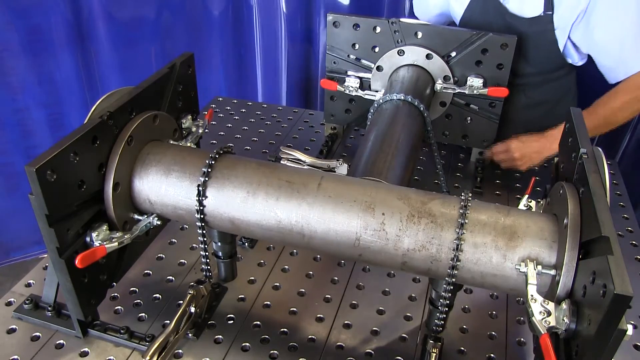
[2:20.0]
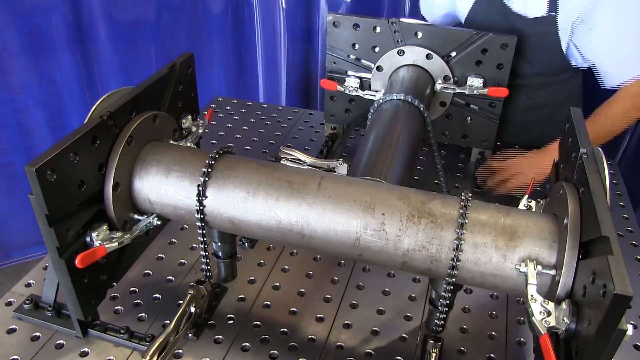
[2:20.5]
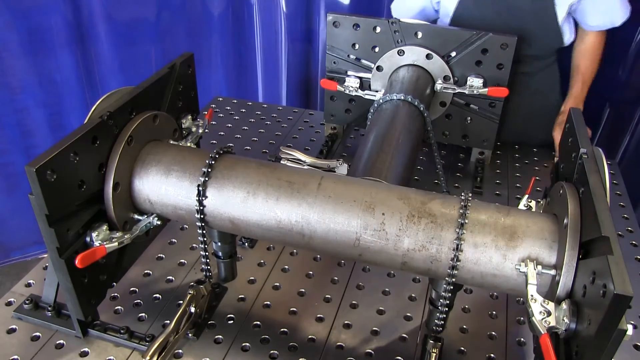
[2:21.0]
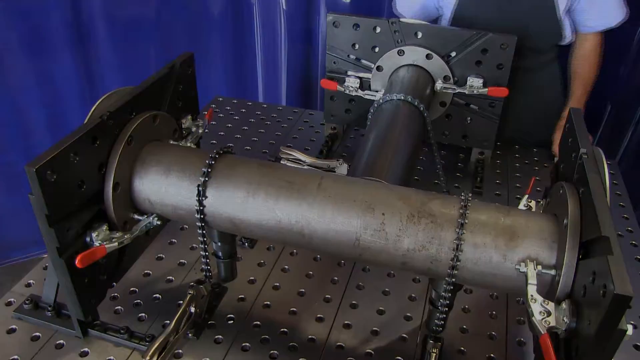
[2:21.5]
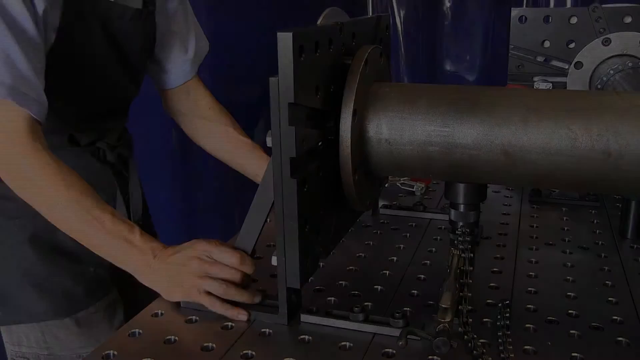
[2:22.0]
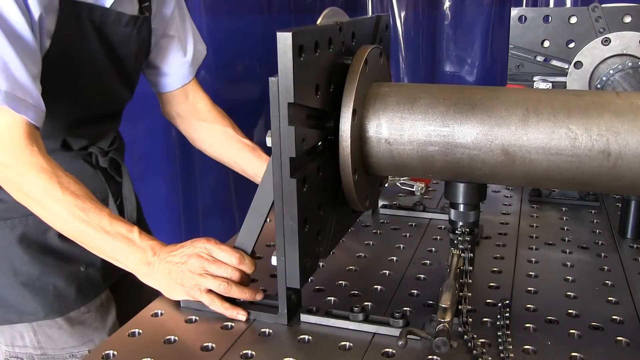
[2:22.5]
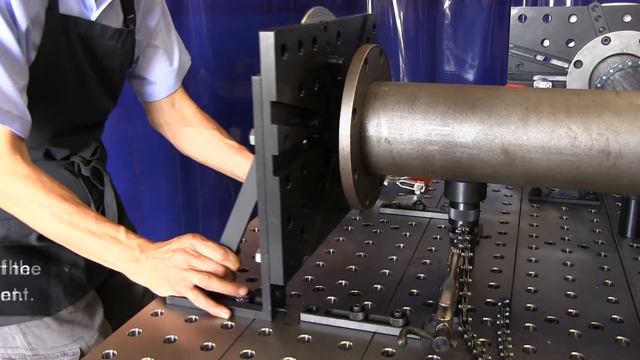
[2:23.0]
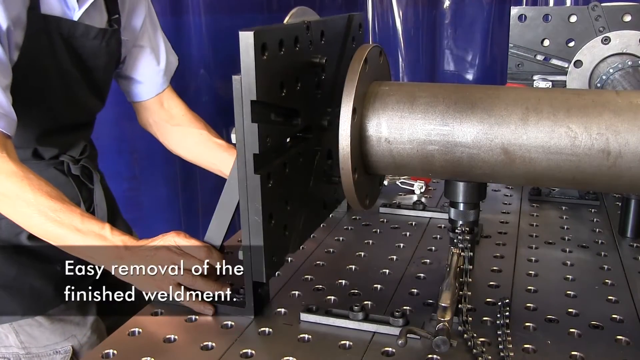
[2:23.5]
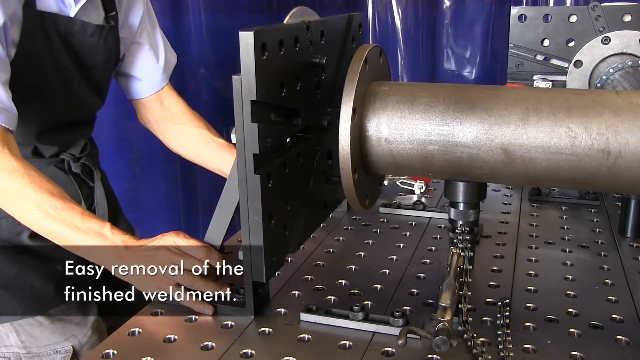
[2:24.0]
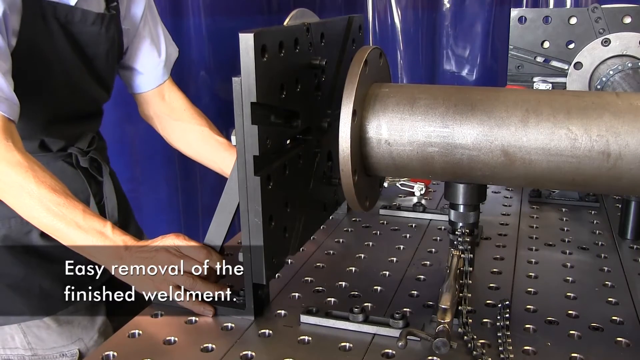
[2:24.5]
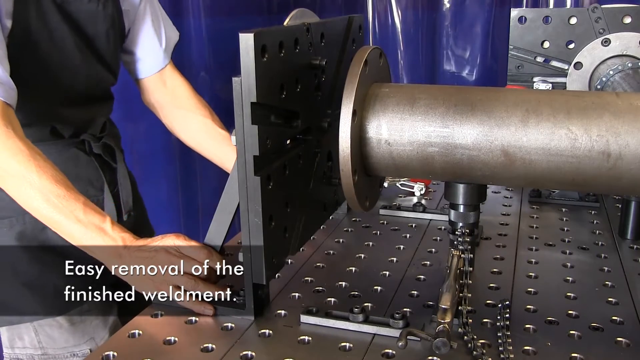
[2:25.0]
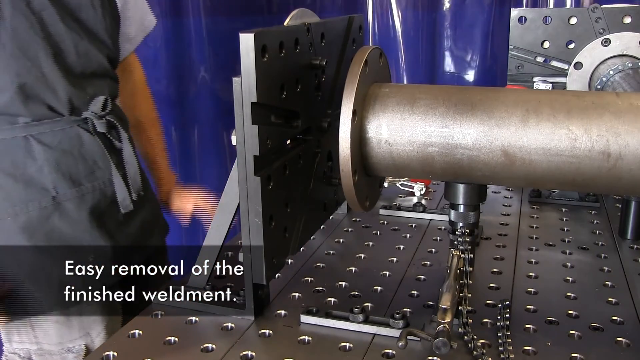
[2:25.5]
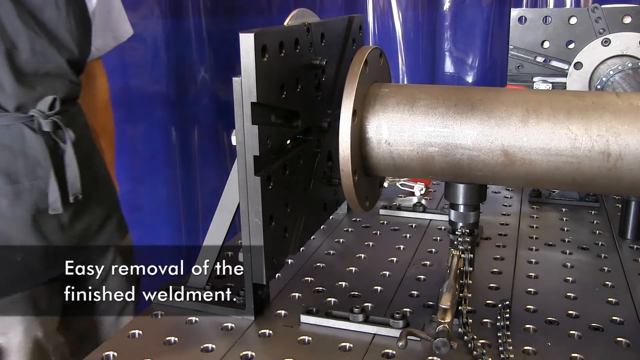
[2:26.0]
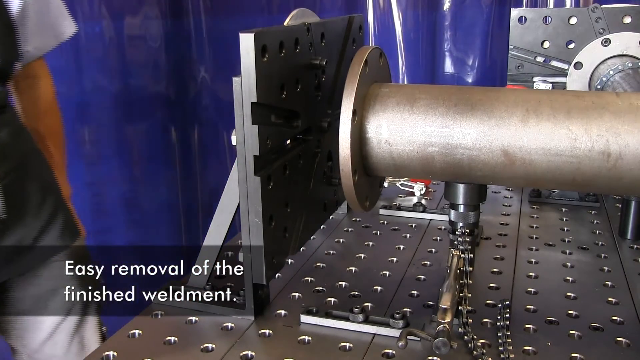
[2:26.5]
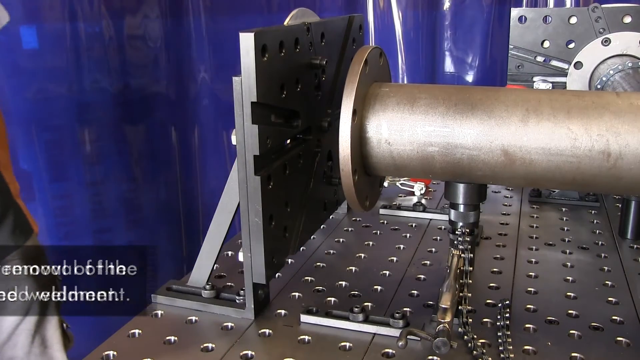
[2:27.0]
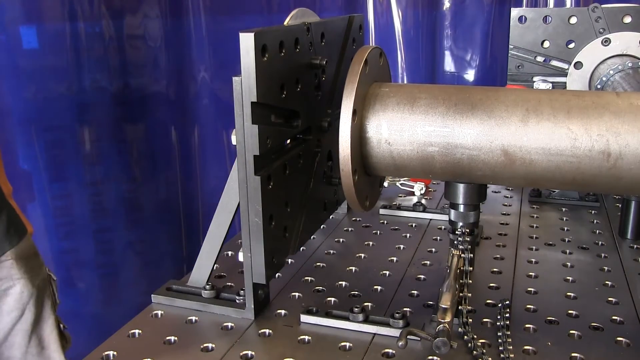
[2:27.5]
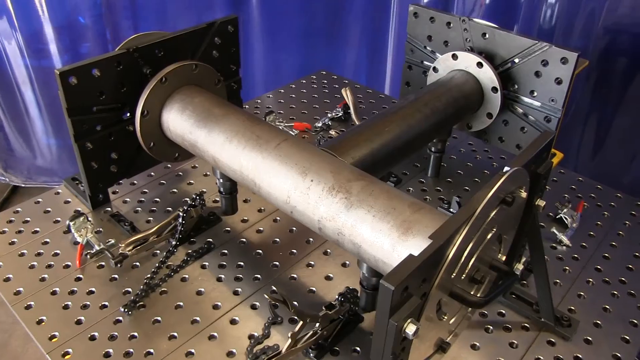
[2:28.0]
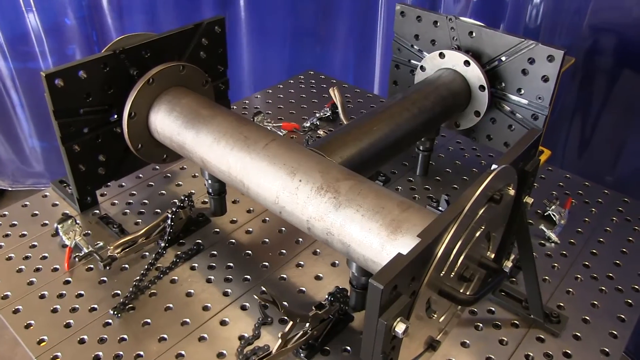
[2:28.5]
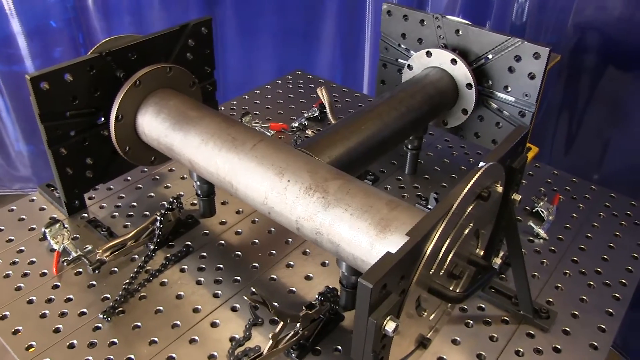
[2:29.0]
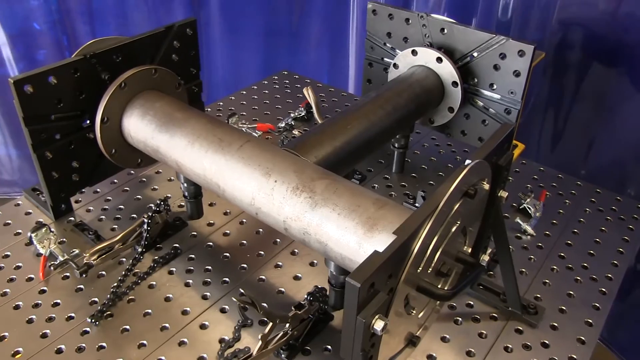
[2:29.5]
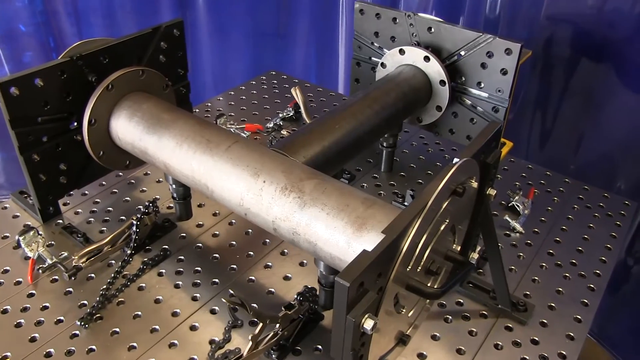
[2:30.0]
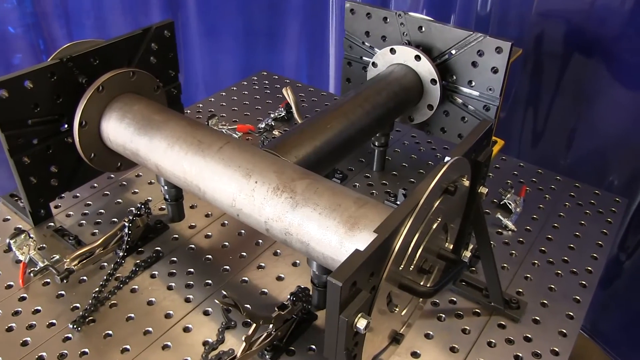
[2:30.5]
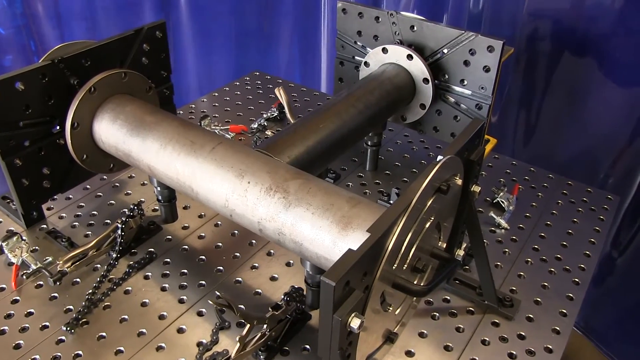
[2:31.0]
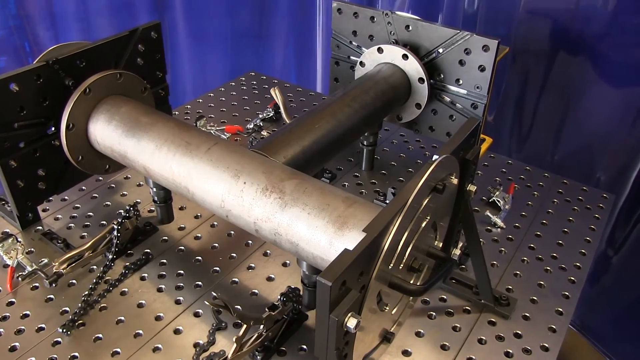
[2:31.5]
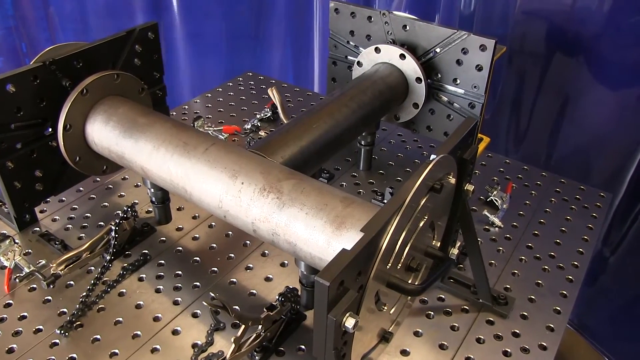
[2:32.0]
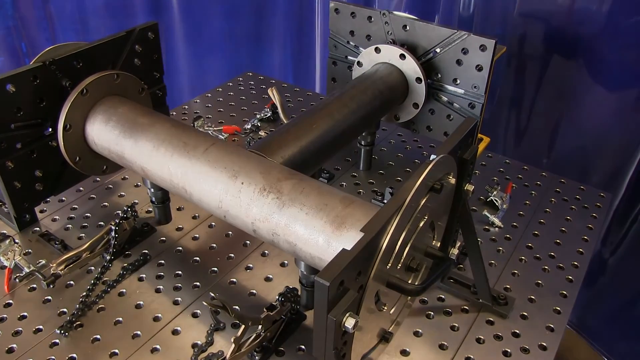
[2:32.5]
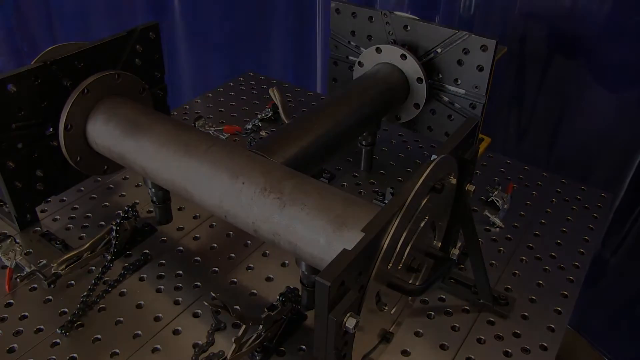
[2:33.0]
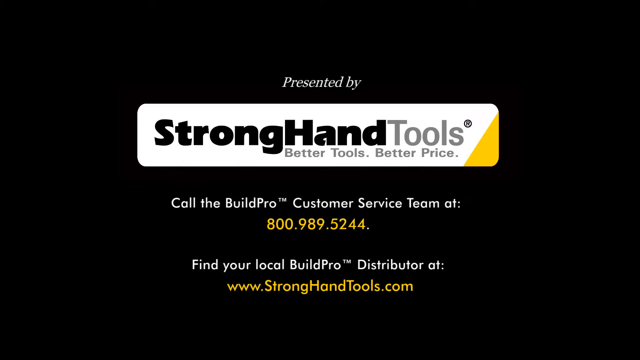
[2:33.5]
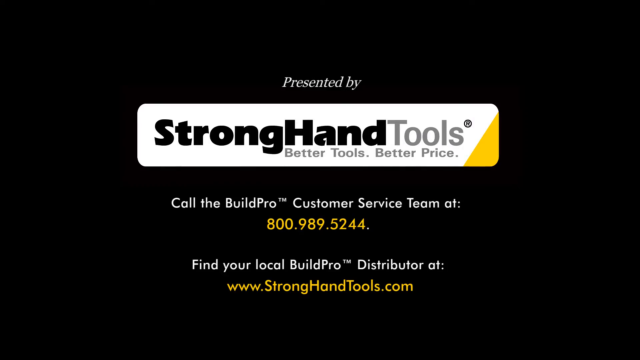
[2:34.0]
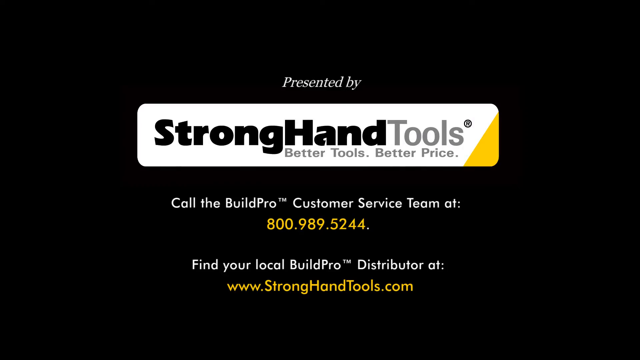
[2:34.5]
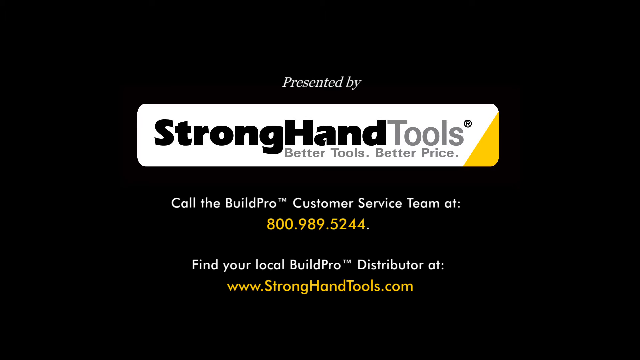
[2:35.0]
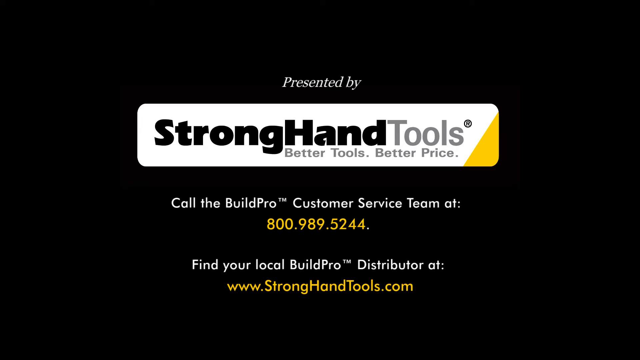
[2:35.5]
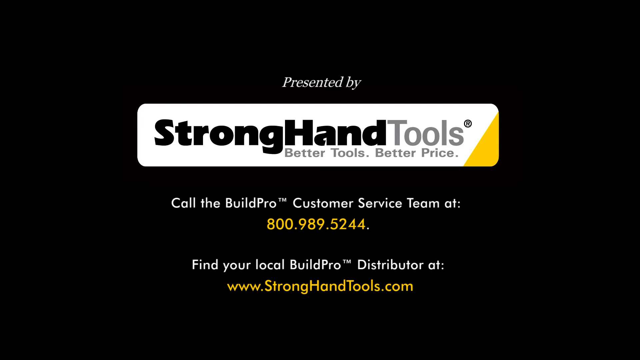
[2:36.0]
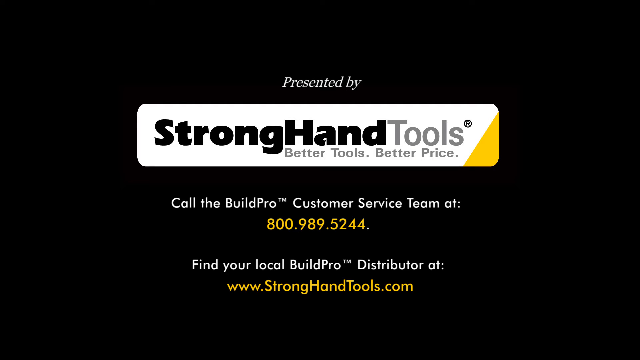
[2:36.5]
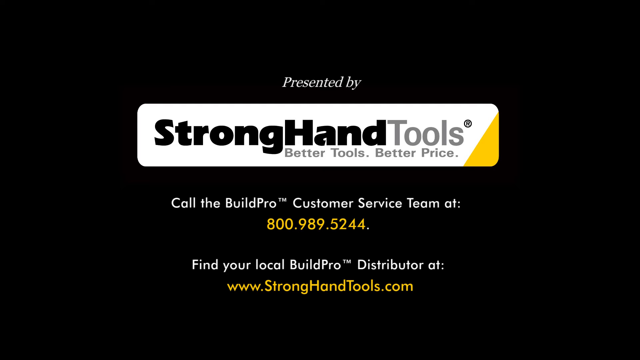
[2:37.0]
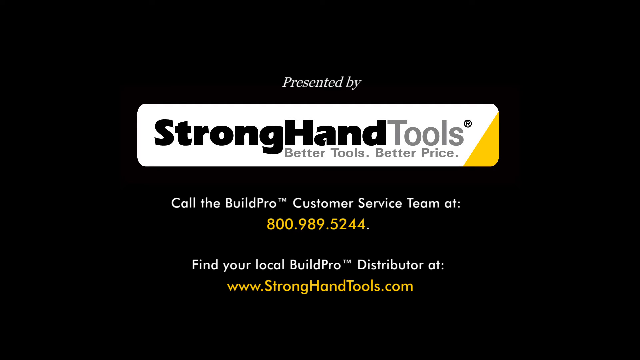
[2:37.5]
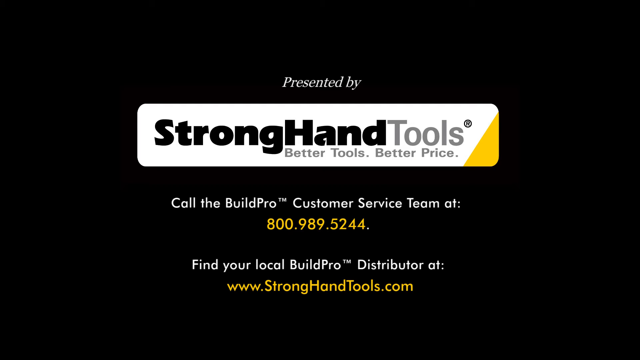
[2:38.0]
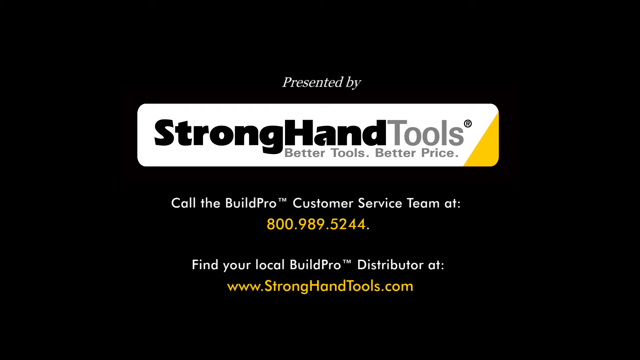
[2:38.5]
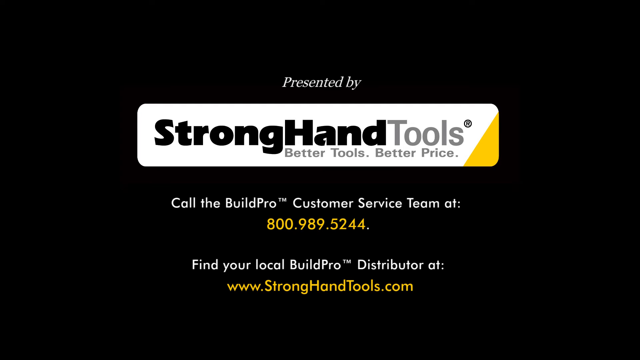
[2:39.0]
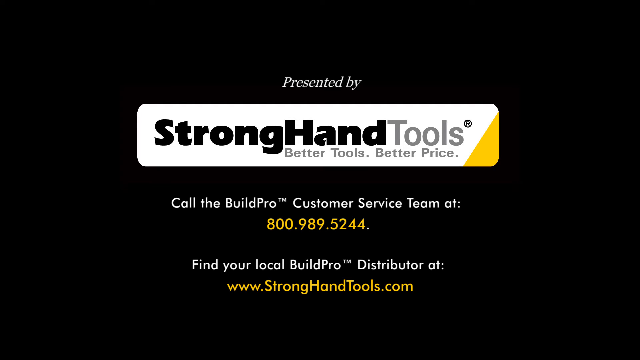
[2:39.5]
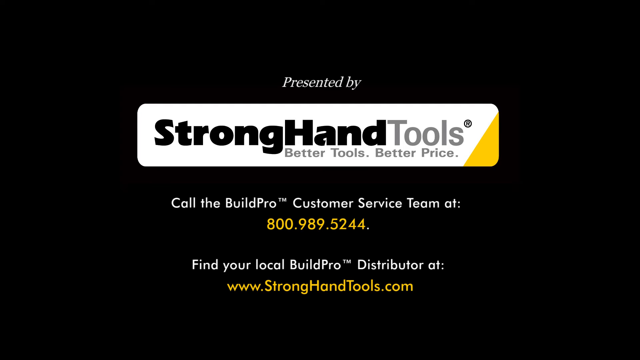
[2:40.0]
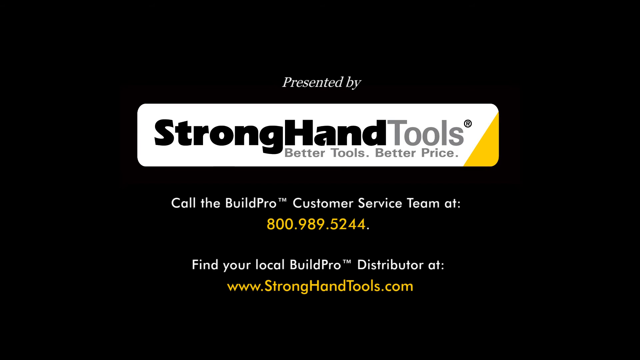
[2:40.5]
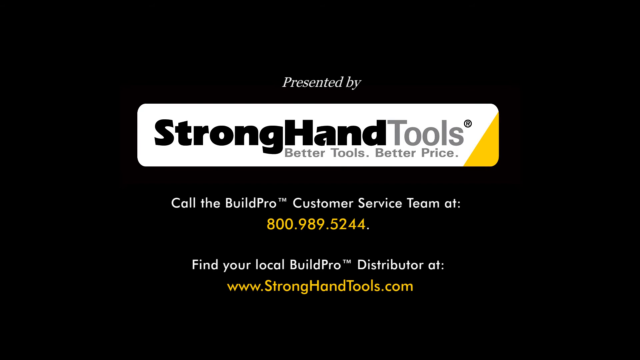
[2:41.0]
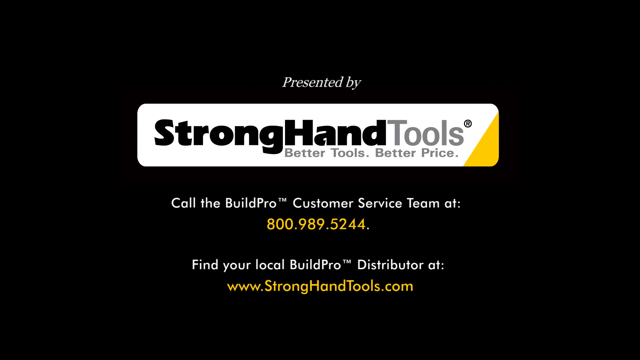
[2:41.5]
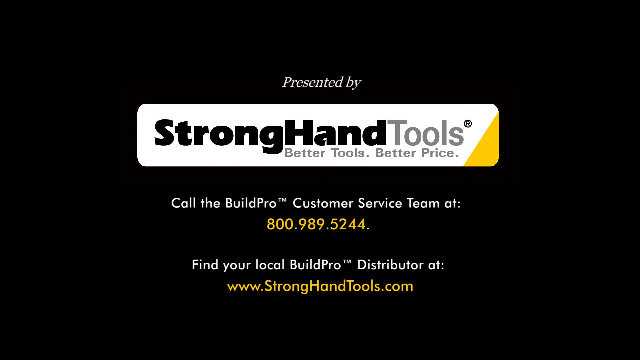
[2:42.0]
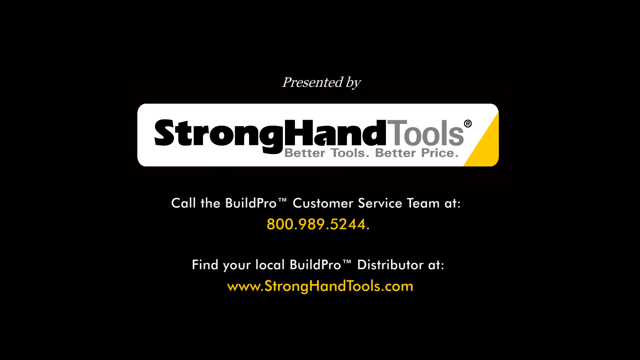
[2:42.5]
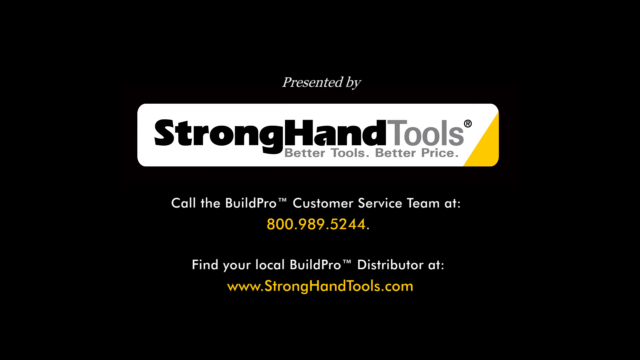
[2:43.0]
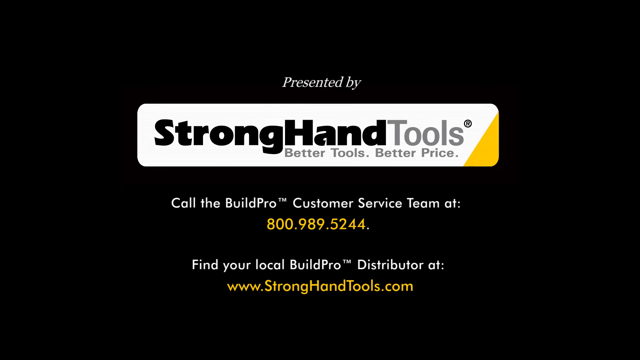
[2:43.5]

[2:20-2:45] The person removes a support that pushed the round circle on the edge of the pipe. A caption says "easy removal of the finished weldment." The man is now seen wearing a short-sleeved button-down shirt under his apron, with the apron strings wrapped securely around his waist. A sign appears reading "Stronghand Tools, better tools, better price. Call the Build Pro customer service team at," followed by a number in yellow. The Stronghand Tools logo has black lettering, bolded for "Stronghand" and gray for "tools," on a white rectangular background. The sign also reads "You can find your local Build Pro distributor at" followed by the website "www.stronghandtools.com" in yellow. The project and the man are no longer seen; only the sign remains on the screen.